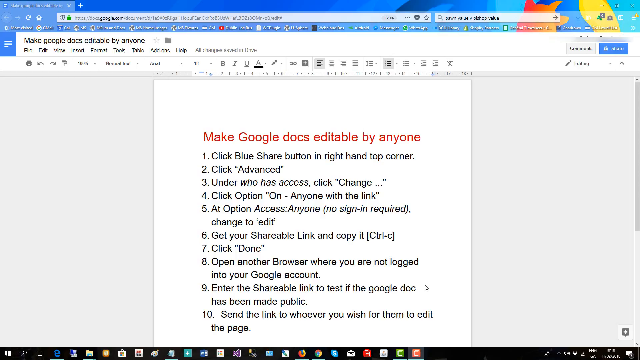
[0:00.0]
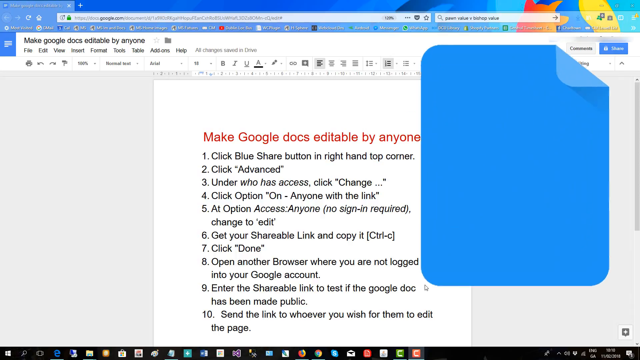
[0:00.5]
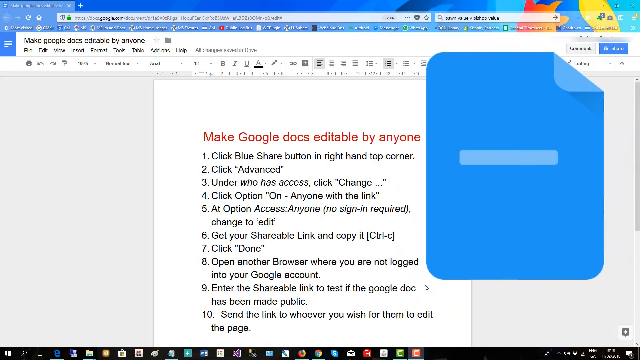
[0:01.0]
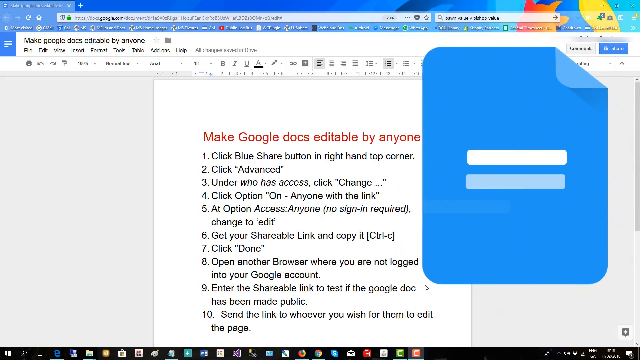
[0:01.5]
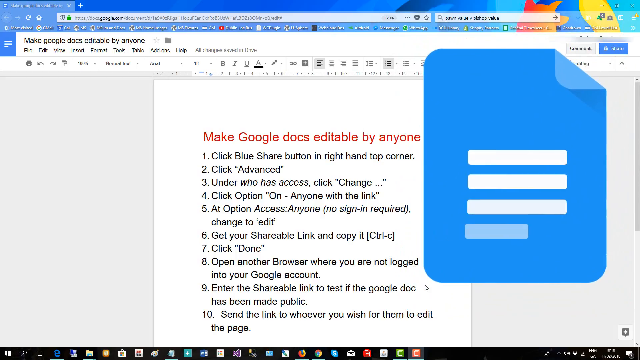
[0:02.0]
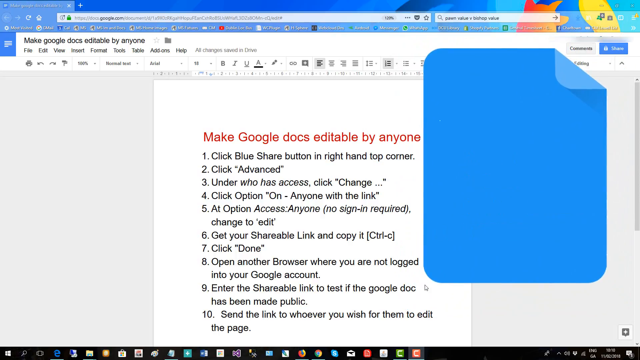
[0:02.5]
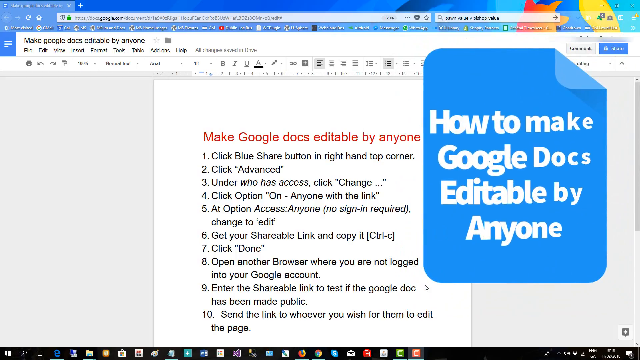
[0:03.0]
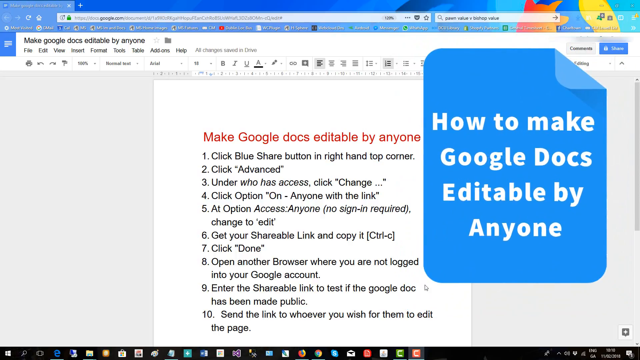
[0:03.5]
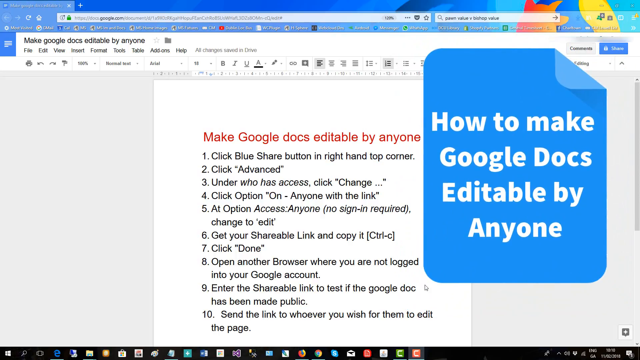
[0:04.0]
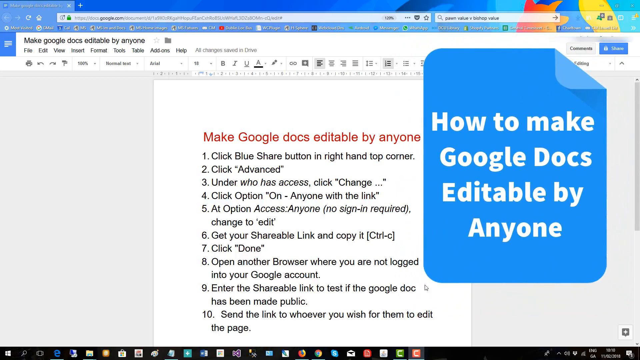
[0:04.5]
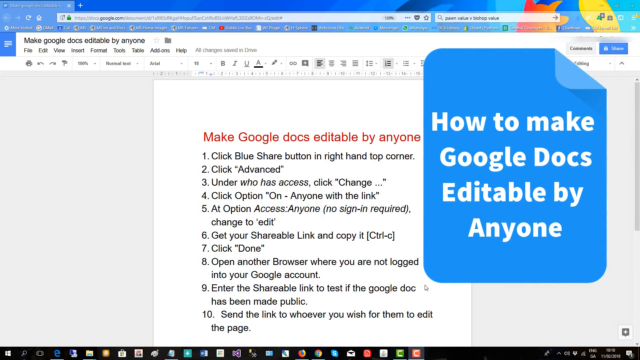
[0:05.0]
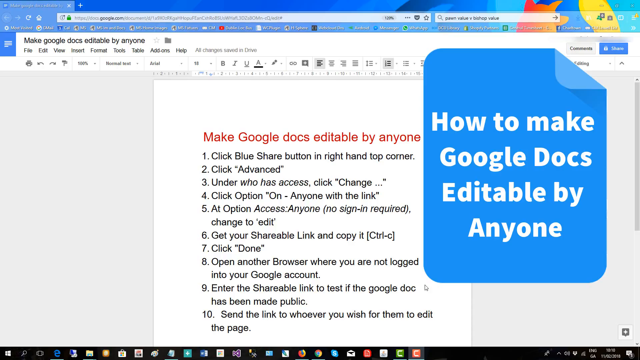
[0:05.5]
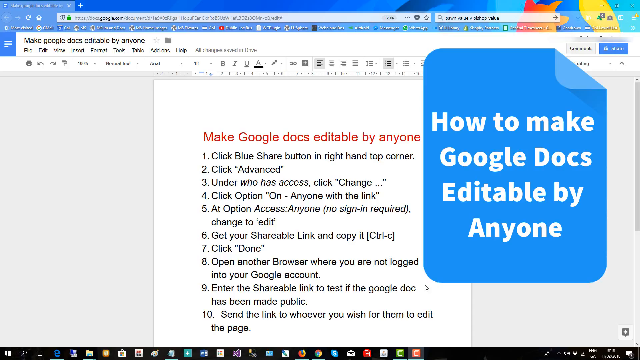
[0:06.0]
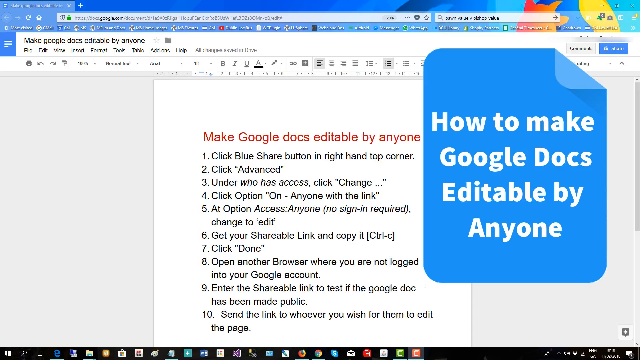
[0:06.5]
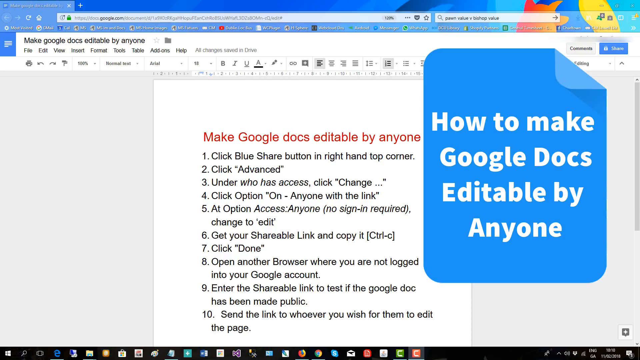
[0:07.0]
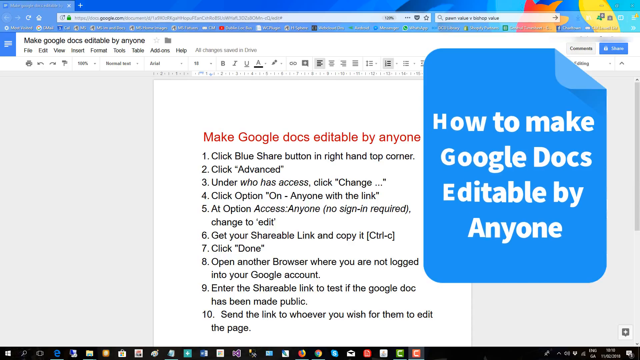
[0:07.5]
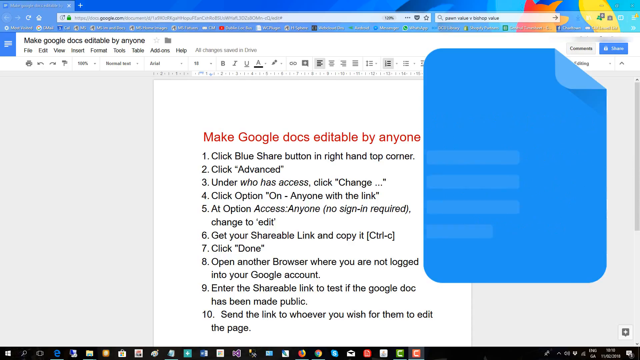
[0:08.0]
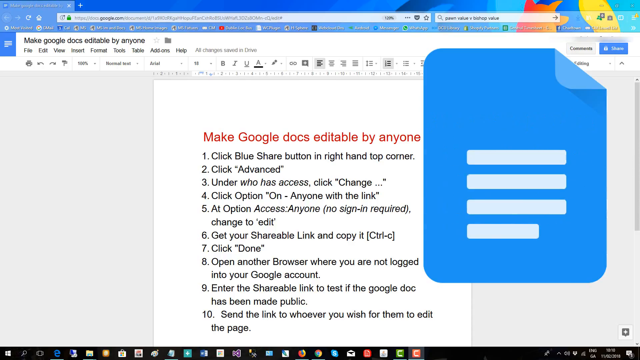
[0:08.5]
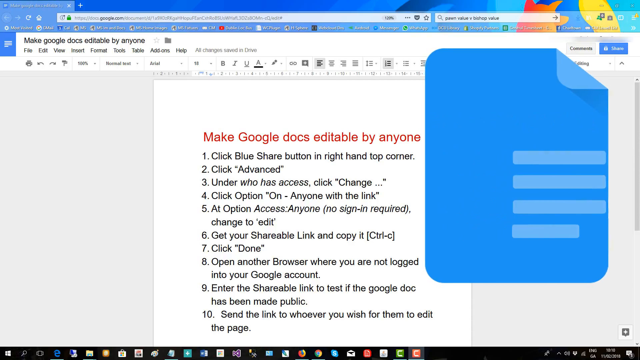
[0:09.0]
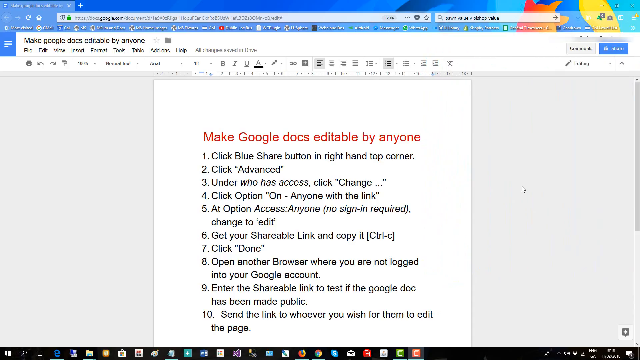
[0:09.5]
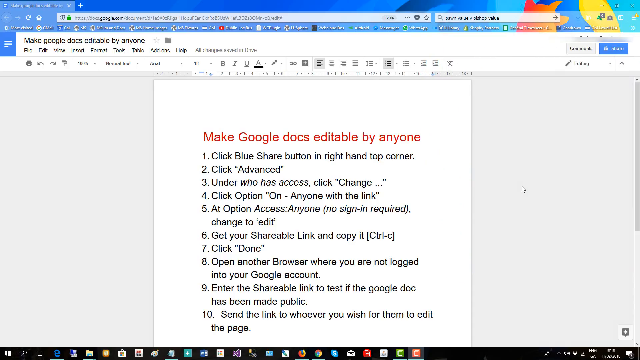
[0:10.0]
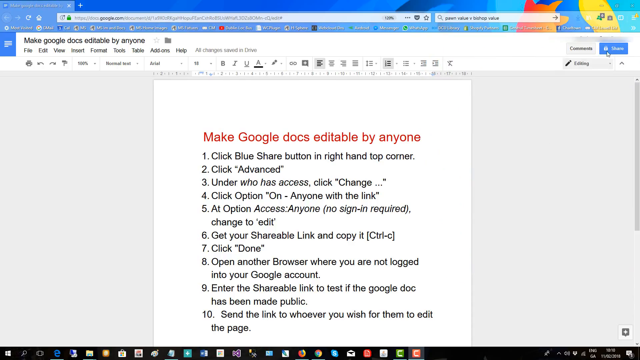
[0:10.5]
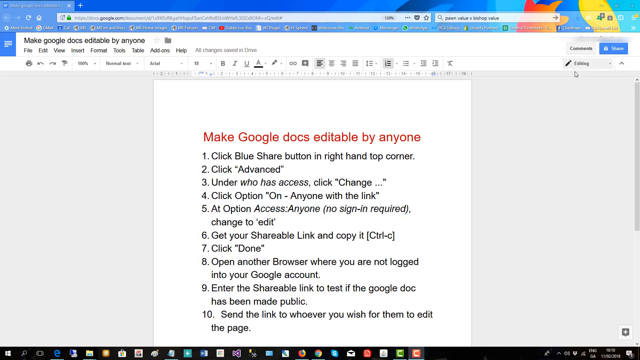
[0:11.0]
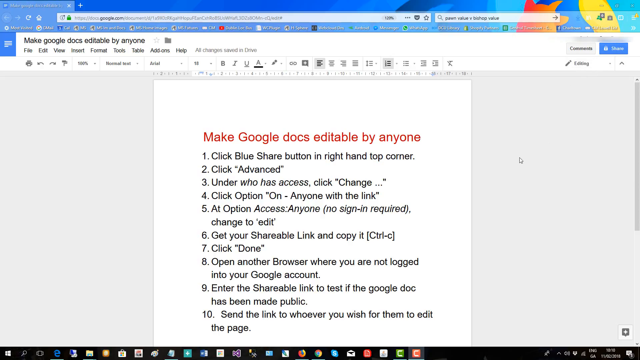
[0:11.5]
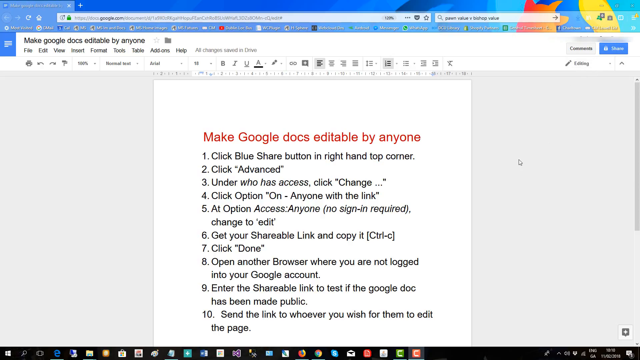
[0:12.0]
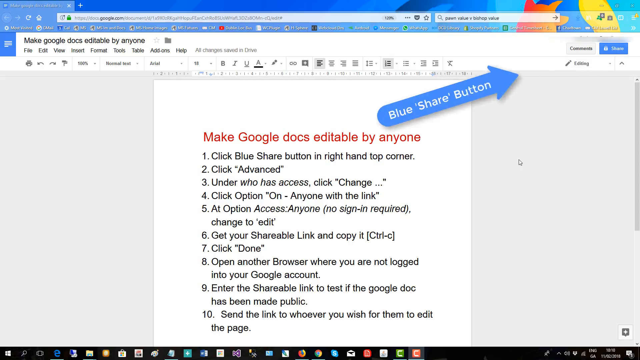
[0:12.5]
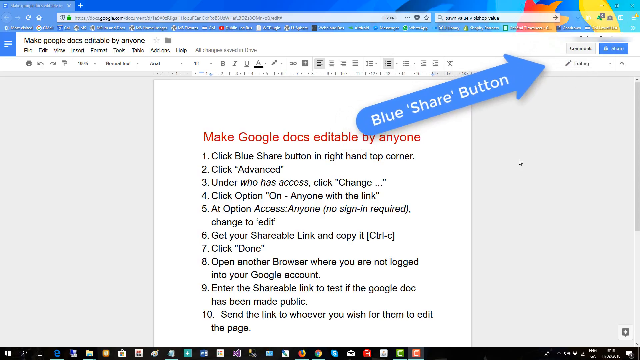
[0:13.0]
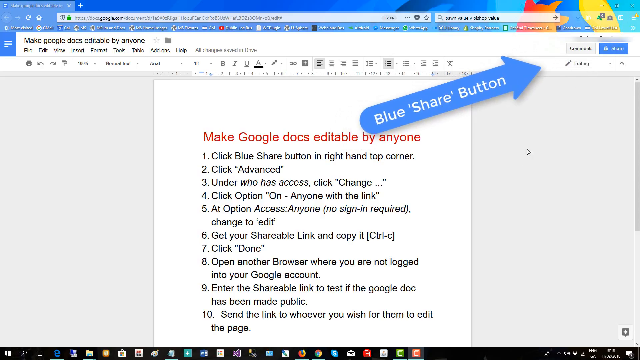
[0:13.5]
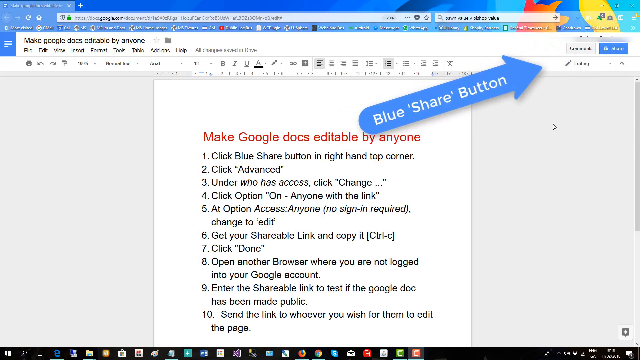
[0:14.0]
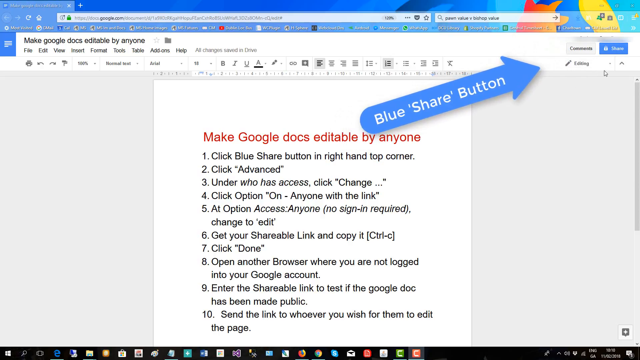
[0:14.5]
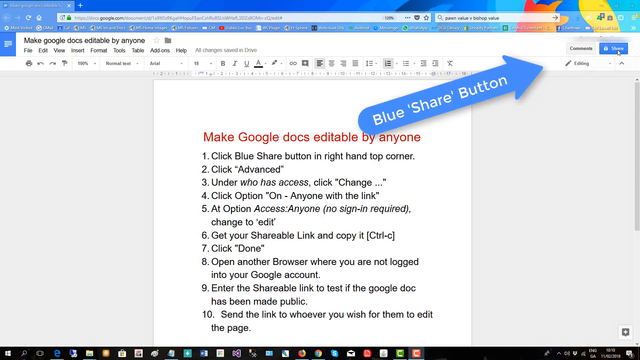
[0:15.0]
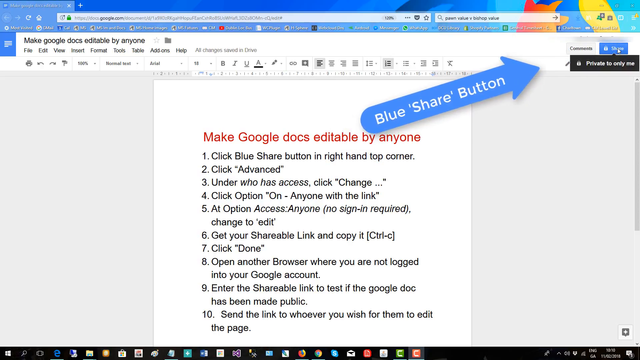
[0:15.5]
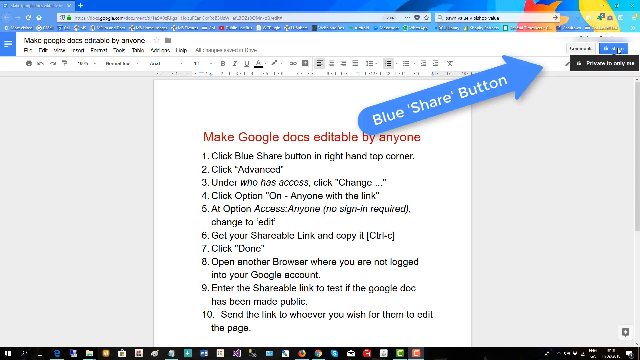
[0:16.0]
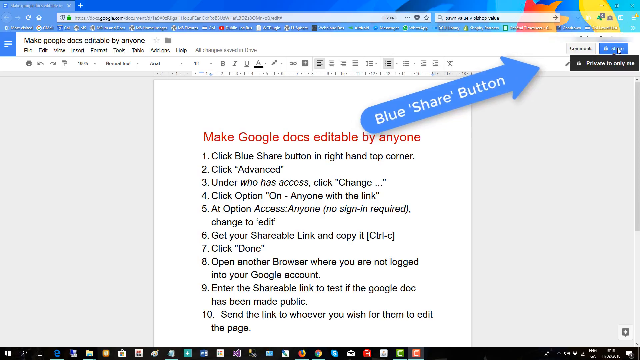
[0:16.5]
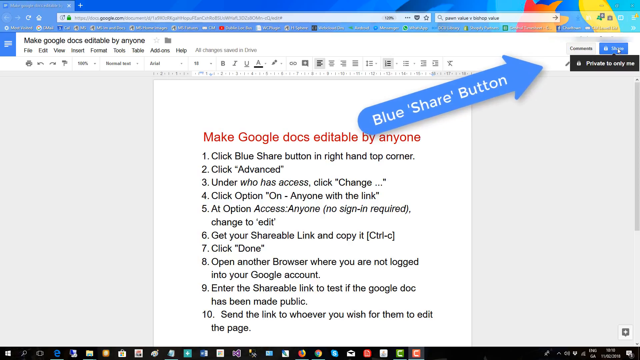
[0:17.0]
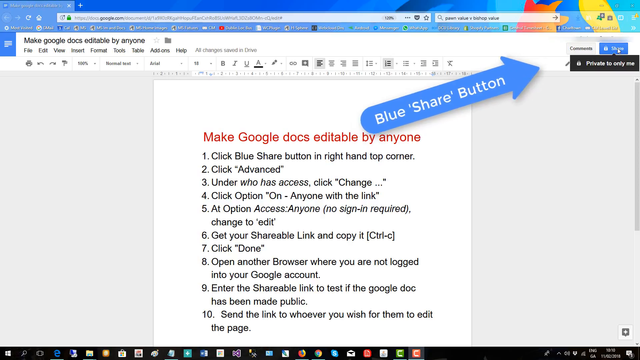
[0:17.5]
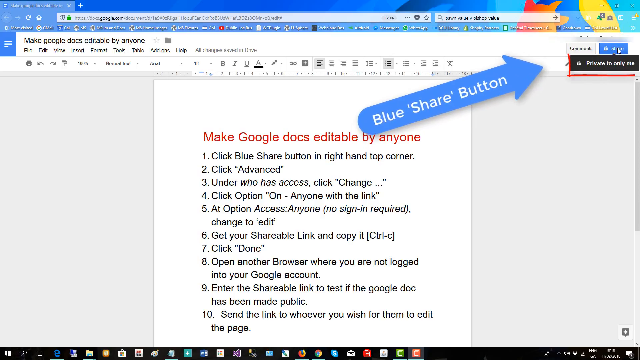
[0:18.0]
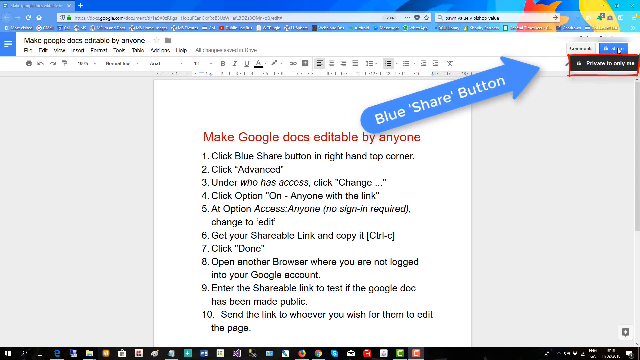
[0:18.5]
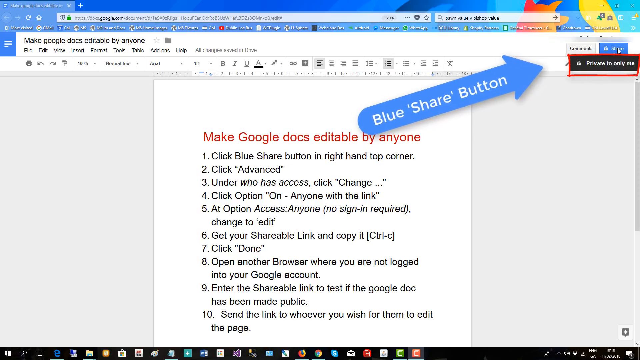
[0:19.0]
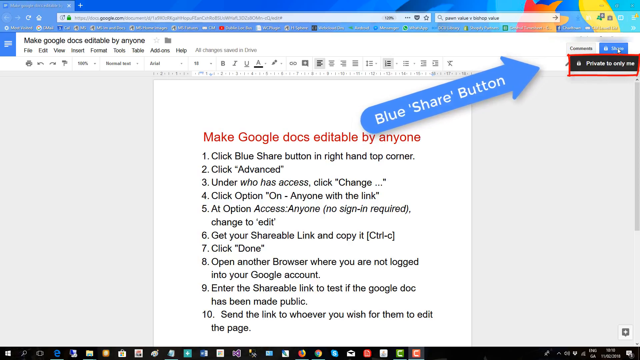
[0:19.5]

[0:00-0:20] The video opens on a browser showing some google.com page, though which page is unclear. A list on the page reads "make google docs editable by anyone" and gives numbered steps, beginning with "click blue share button in the right hand top corner," "click advanced" and "under who has access click change," followed by steps about choosing the option for anyone with the link, changing access to edit, copying the shareable link, clicking done, opening another browser to test the link in Google Docs, and sending it to whoever should edit the page. All of this is visible as soon as the video starts. A separate blue window then pops up to the side reading "how to make Google Docs editable by anyone." As the video goes through the instructions, arrows pop up to demonstrate each step.